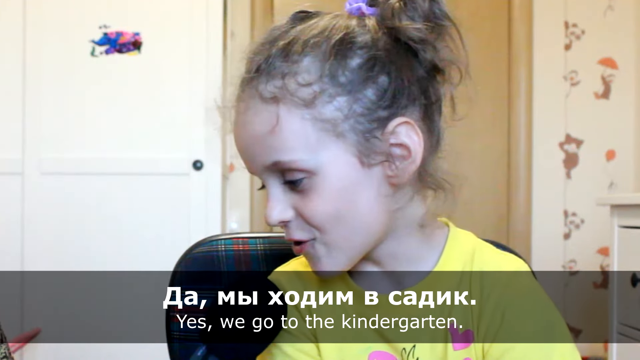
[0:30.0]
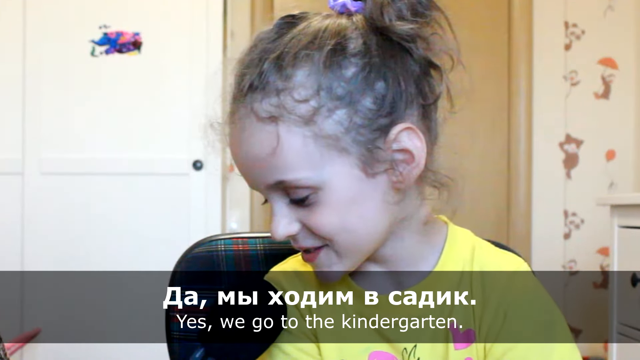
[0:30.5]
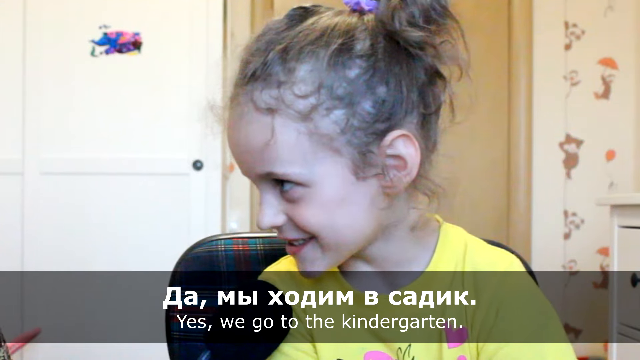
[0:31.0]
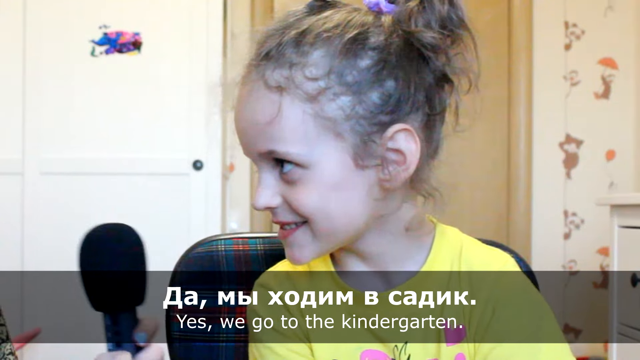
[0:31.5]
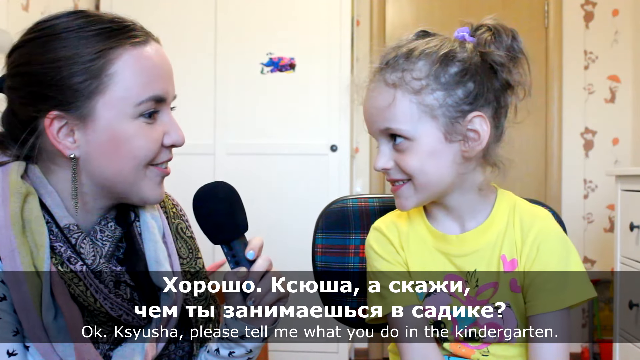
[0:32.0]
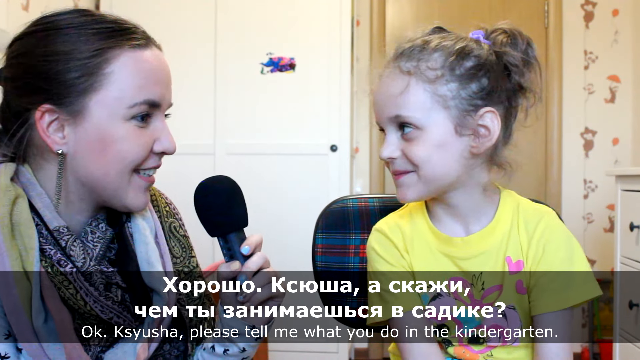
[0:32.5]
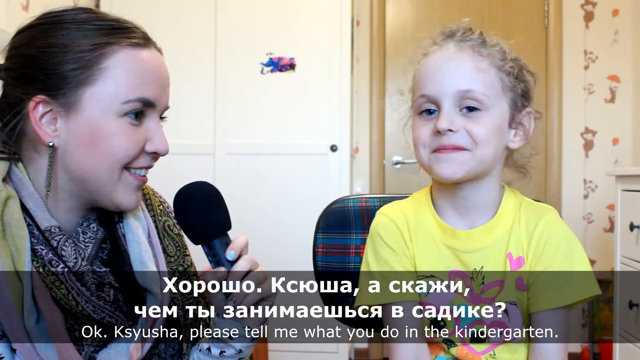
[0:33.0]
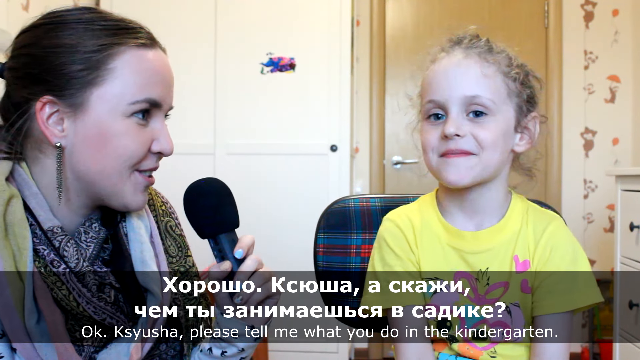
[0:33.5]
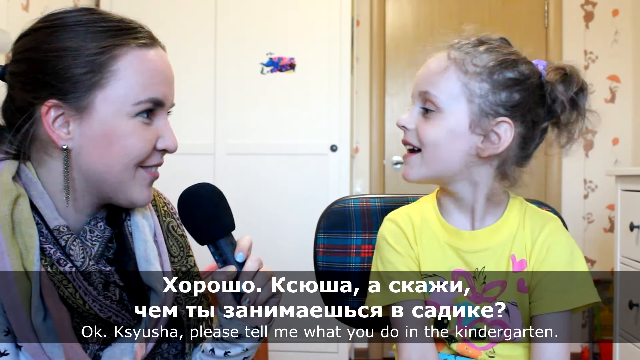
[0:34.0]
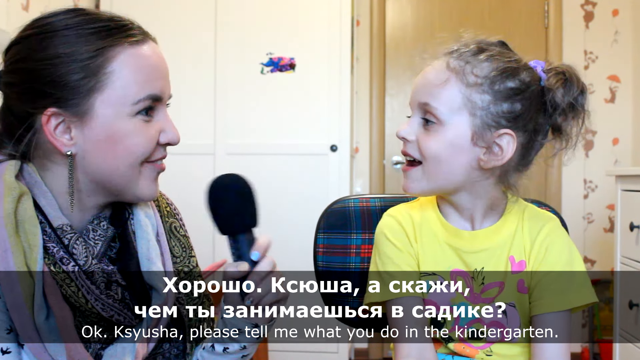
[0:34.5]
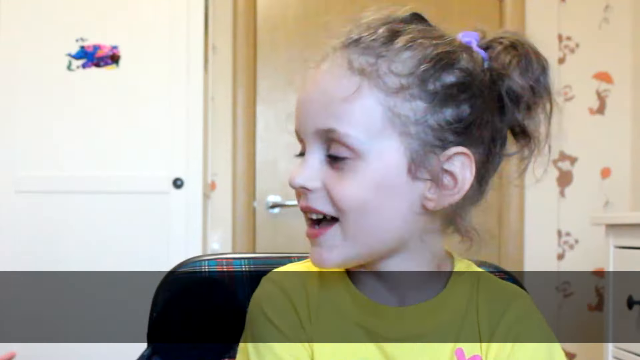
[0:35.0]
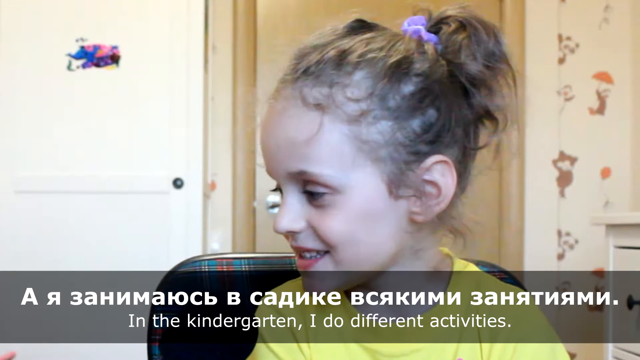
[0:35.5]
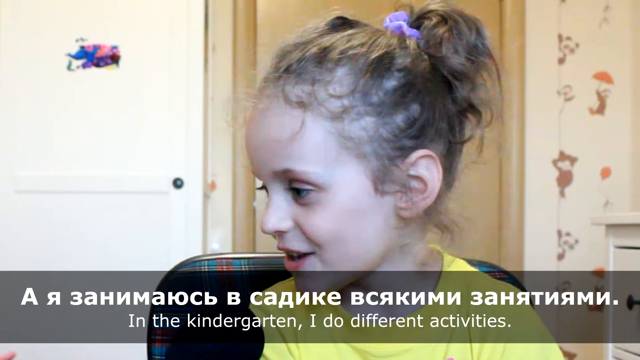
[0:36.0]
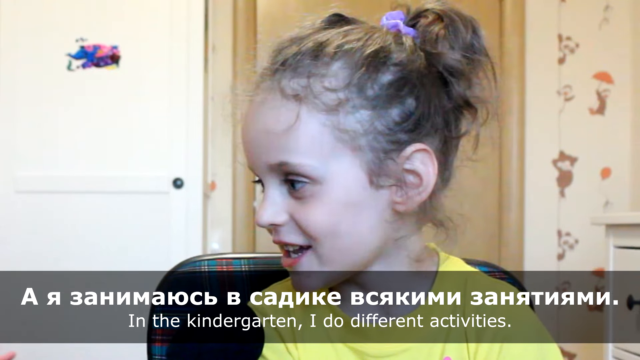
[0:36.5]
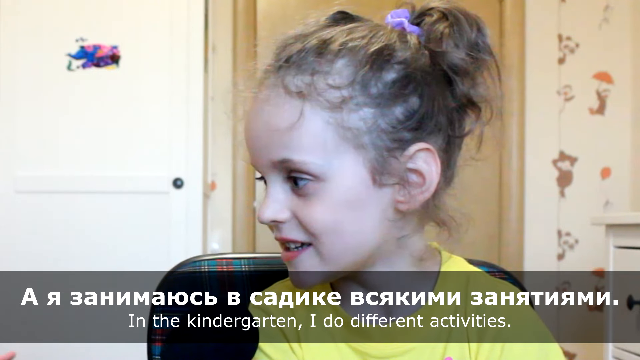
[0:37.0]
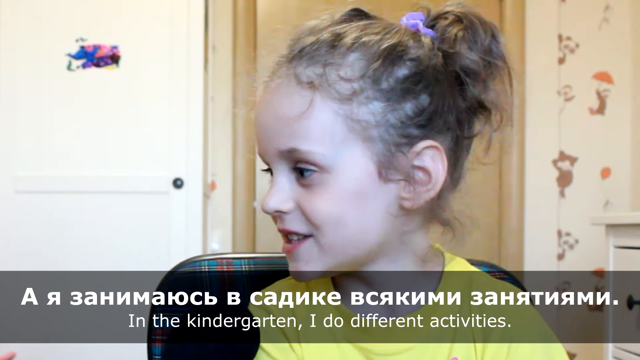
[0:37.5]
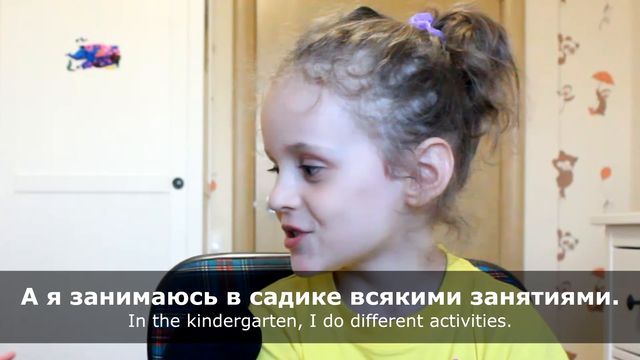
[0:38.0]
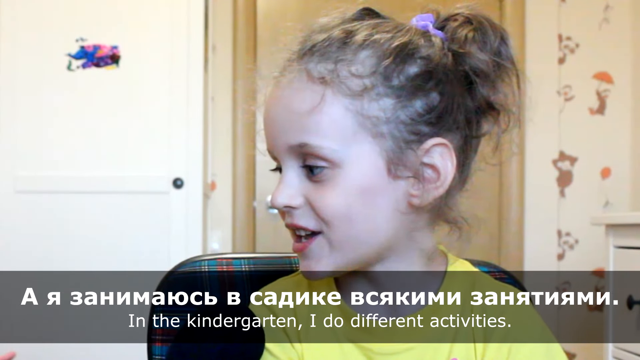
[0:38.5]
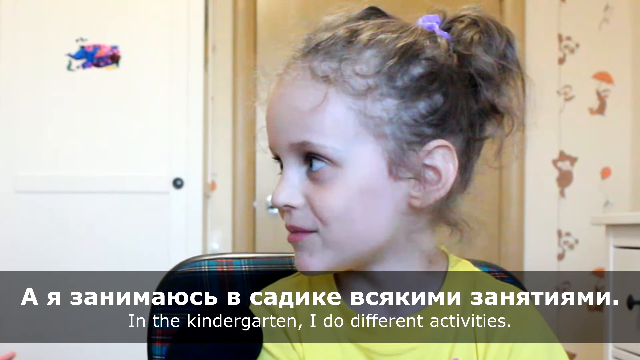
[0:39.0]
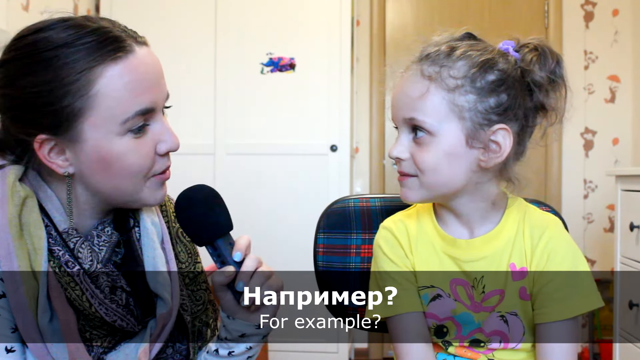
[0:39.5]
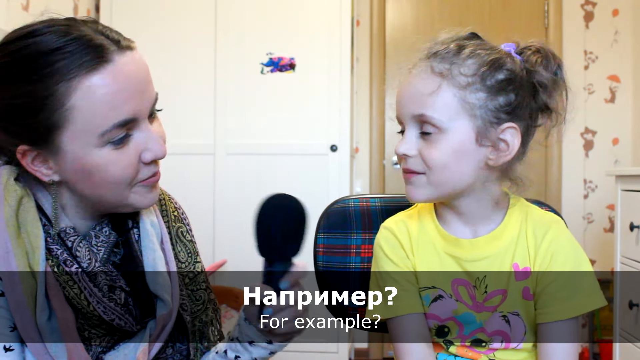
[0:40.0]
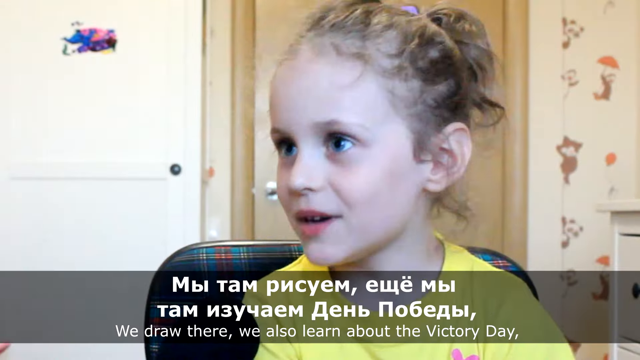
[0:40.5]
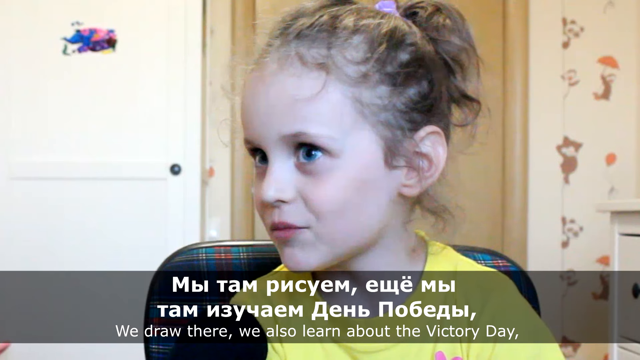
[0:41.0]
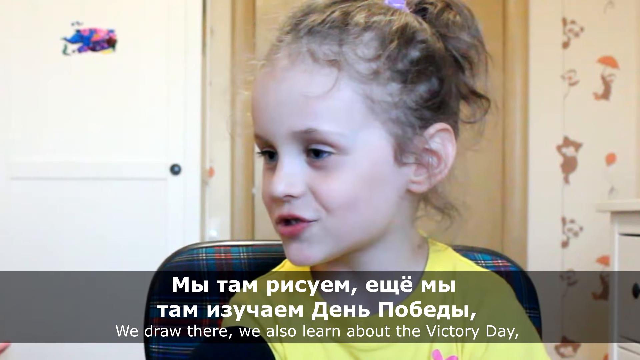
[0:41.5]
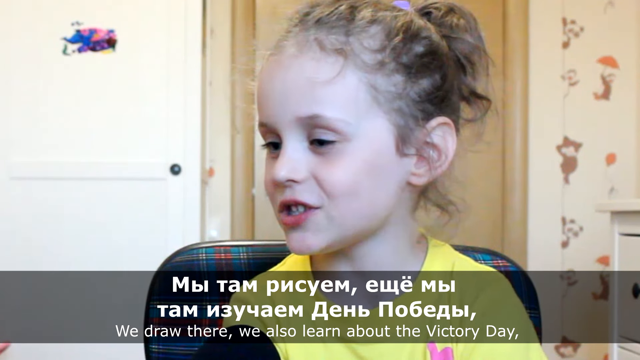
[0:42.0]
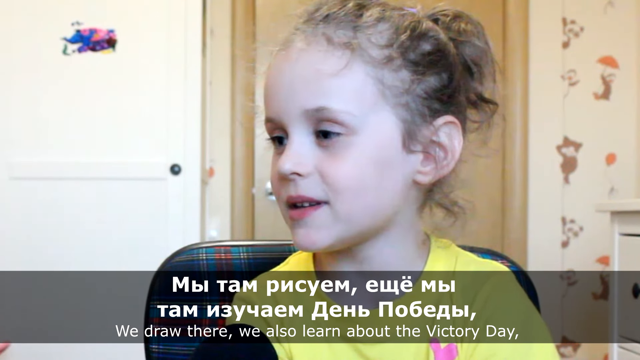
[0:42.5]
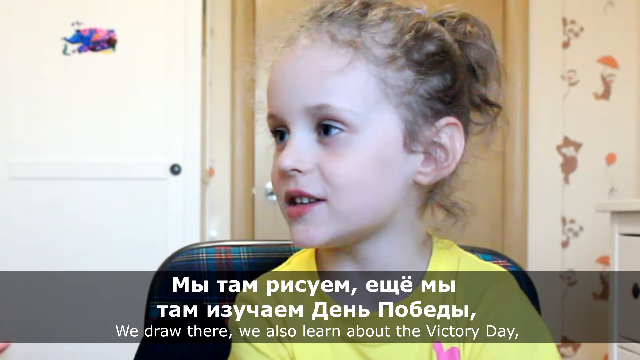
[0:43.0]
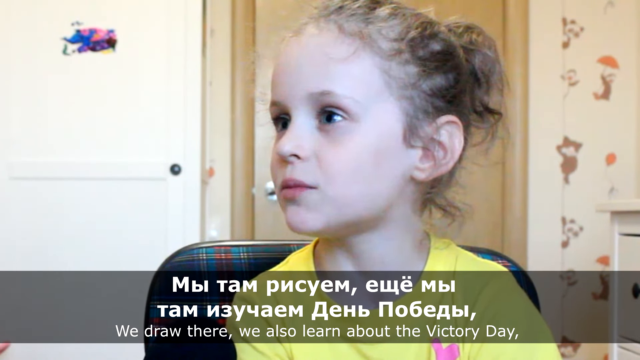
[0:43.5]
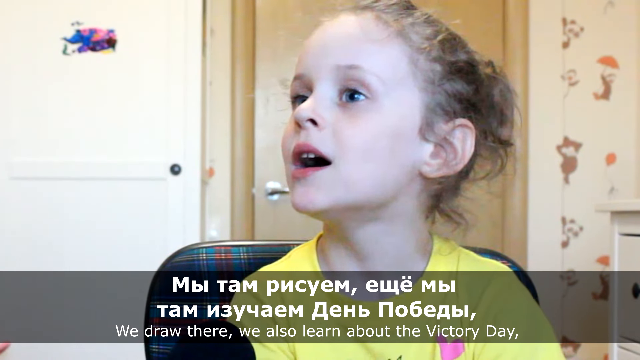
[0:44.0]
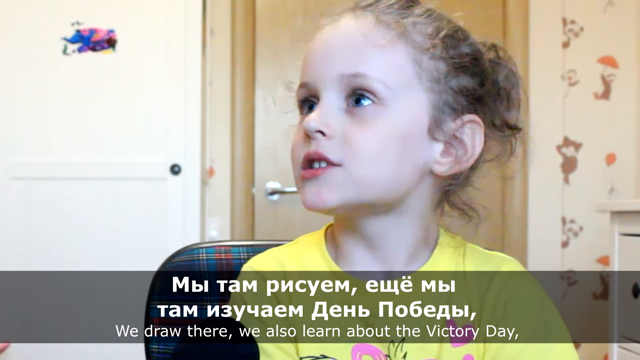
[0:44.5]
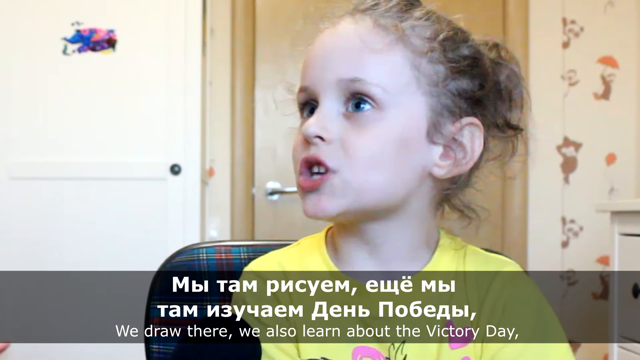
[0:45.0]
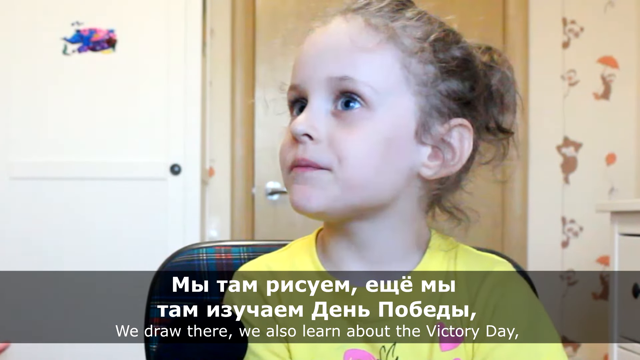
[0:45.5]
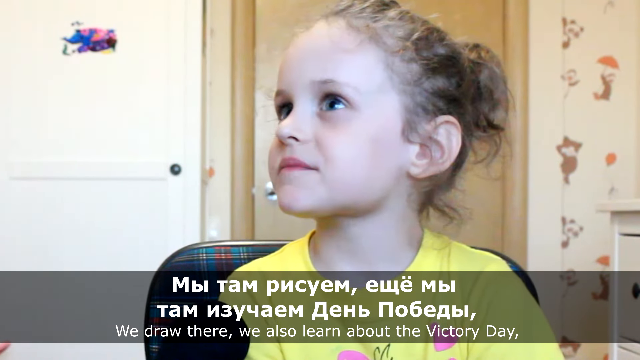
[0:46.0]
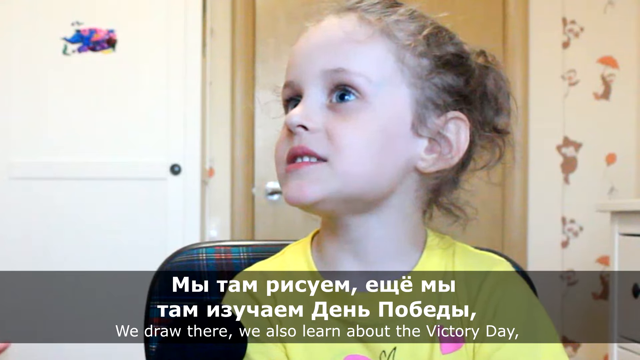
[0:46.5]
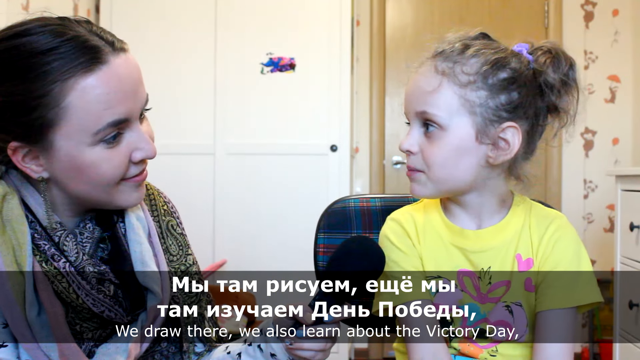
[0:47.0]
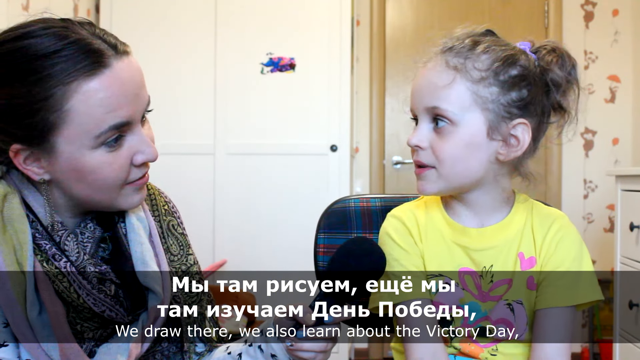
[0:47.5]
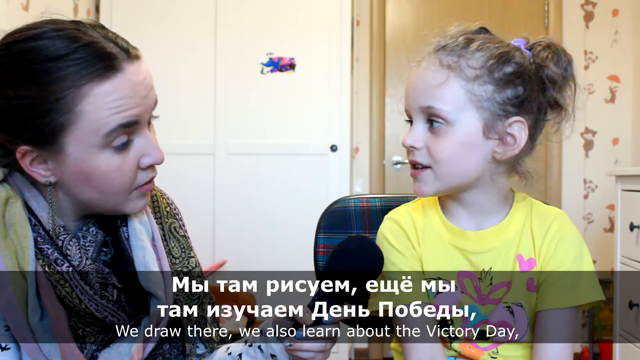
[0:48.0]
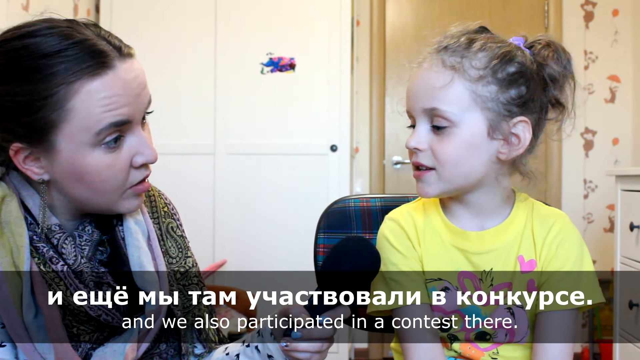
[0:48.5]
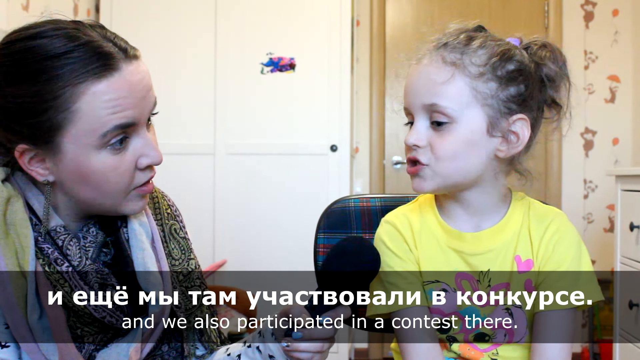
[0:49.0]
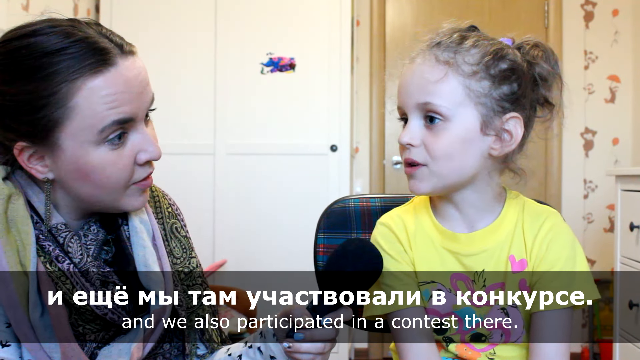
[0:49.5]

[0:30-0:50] The interview in Russian continues. At first both the woman and the girl are in the frame, then the shot focuses on just the girl when she answers. The woman holds the microphone, asks a question and holds it out to the girl, while Russian and then English subtitles appear below. The girl says yes, they go to the kindergarten; the woman asks her to tell what she does there, and the girl says she does different activities. Asked for an example, the girl says they draw there, learned about Victory Day, and participated in a contest. The girl sometimes looks at the camera and smiles while the woman is talking, and she leans into the microphone. The woman listens intently and prompts her, and both look like they are having a great time. In the close-up of the girl, she is sitting on what may be a folding chair, with what looks like a red and blue plaid background.